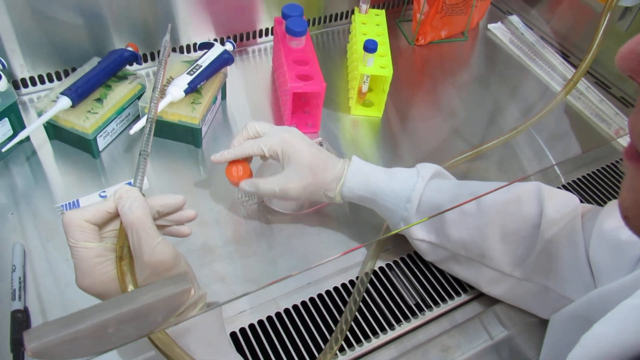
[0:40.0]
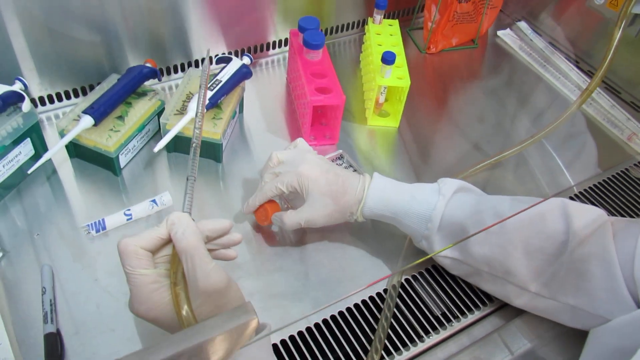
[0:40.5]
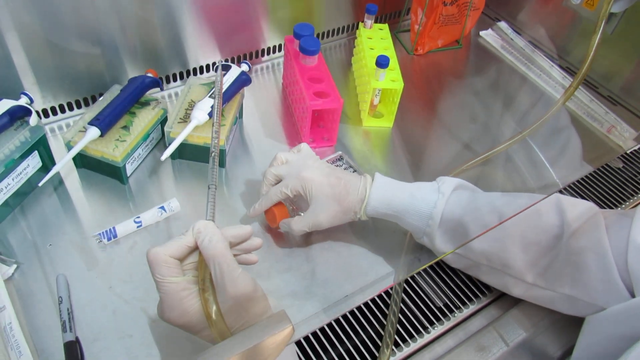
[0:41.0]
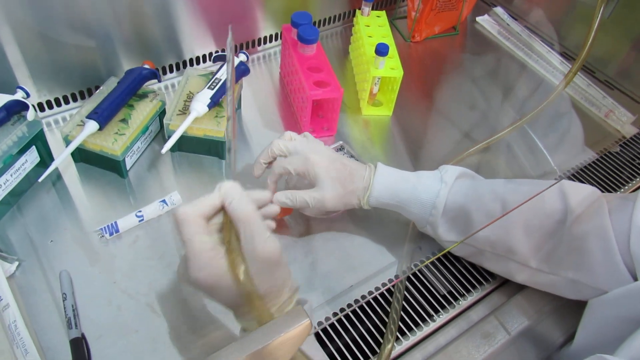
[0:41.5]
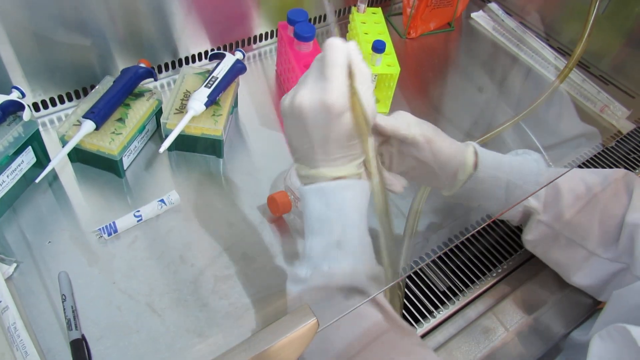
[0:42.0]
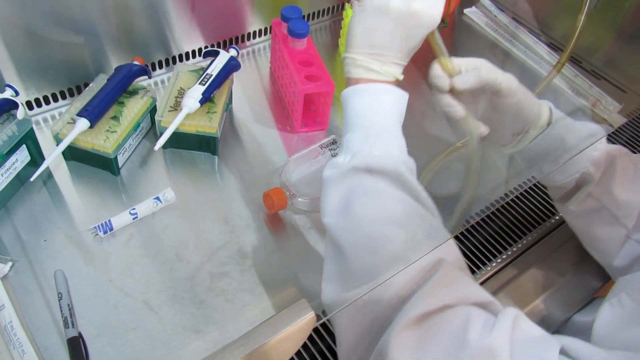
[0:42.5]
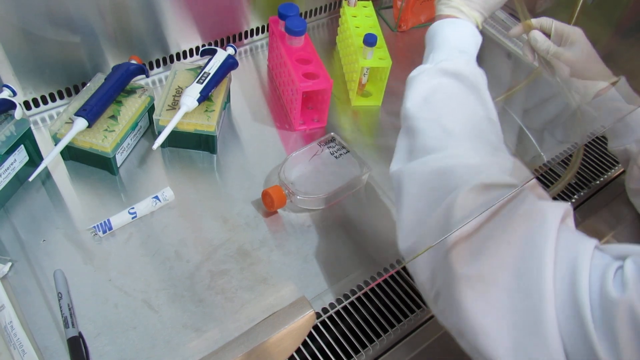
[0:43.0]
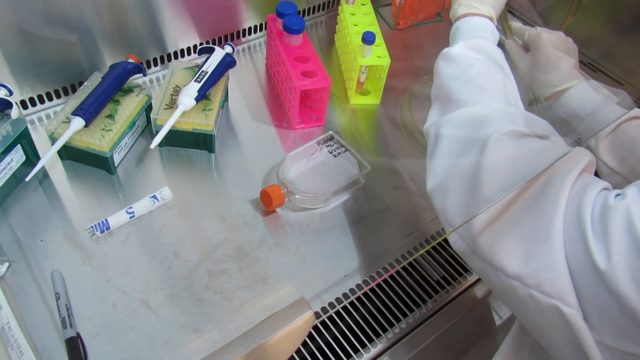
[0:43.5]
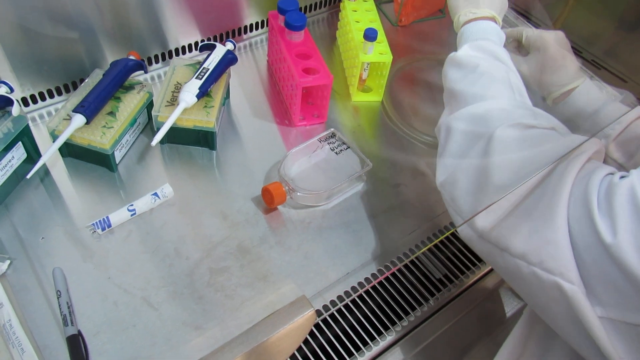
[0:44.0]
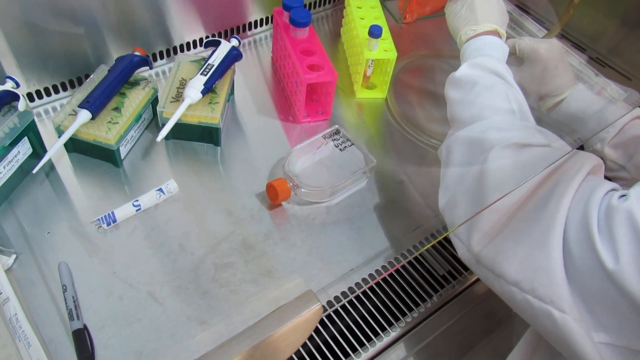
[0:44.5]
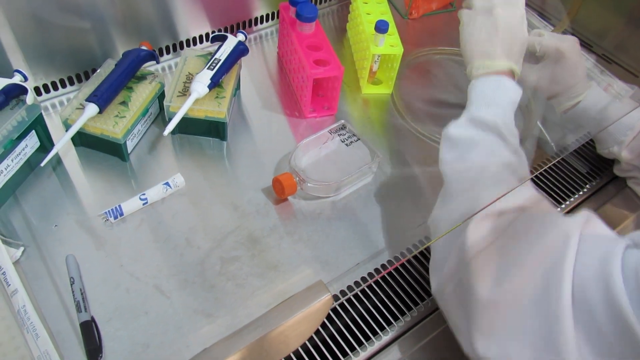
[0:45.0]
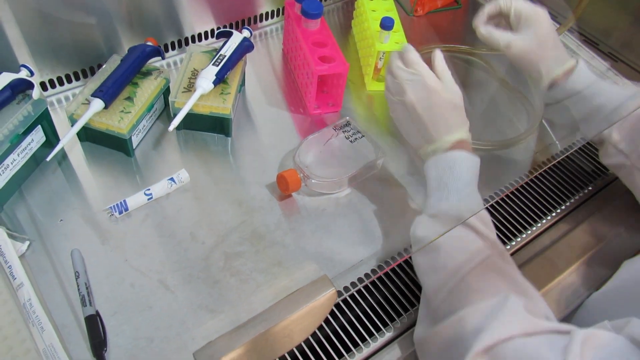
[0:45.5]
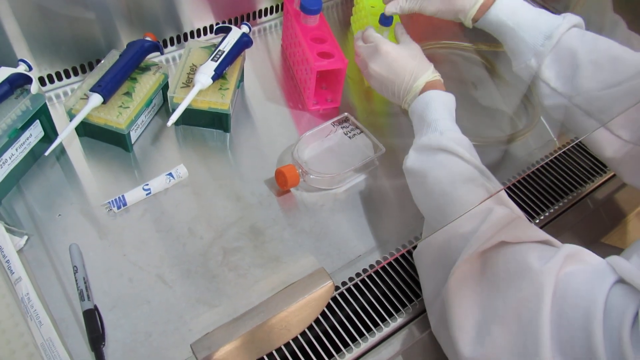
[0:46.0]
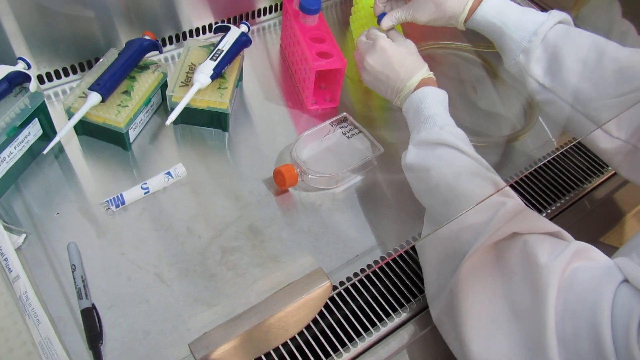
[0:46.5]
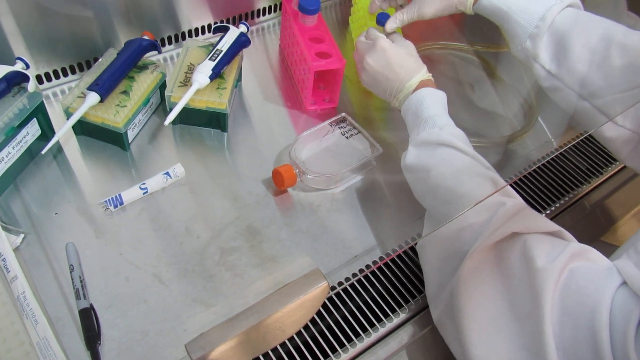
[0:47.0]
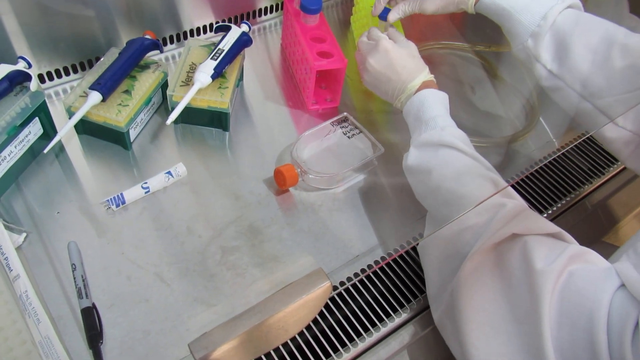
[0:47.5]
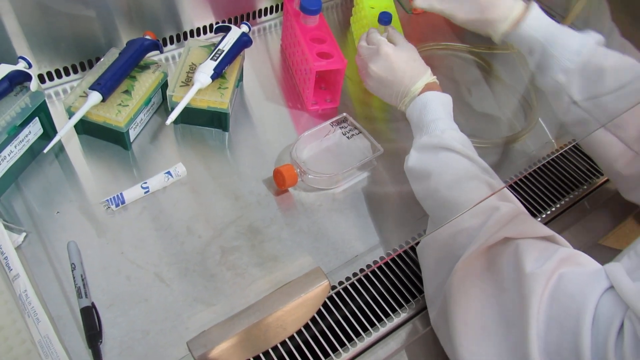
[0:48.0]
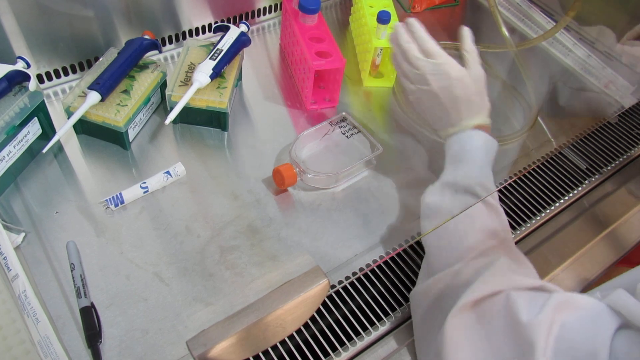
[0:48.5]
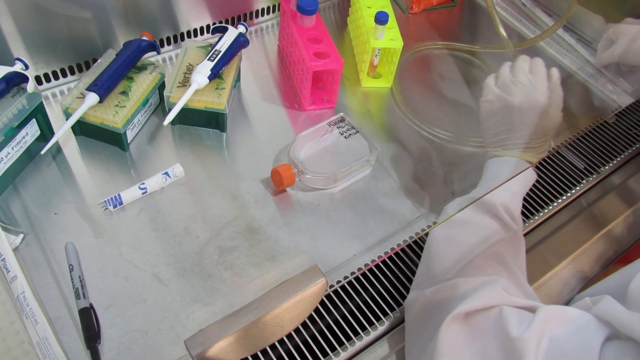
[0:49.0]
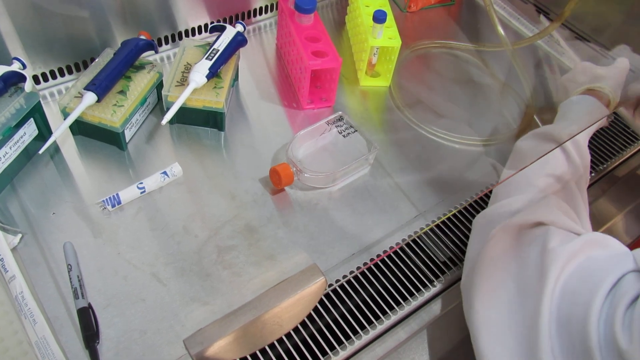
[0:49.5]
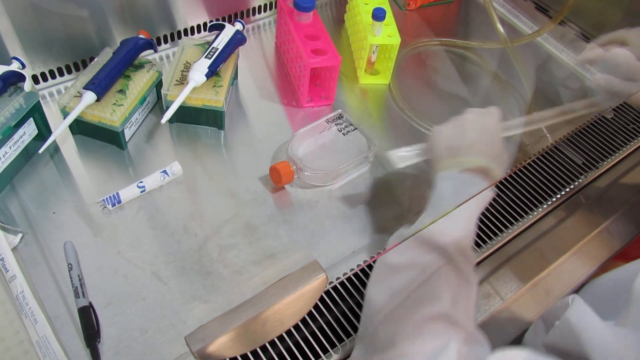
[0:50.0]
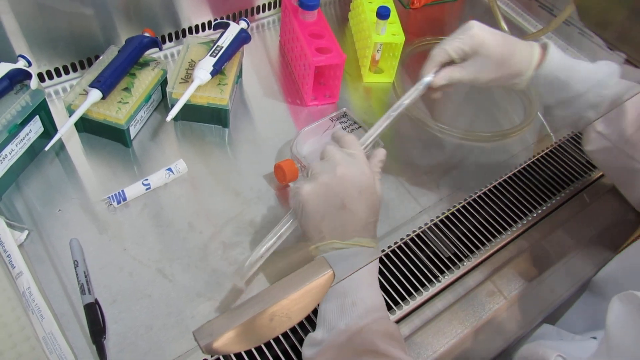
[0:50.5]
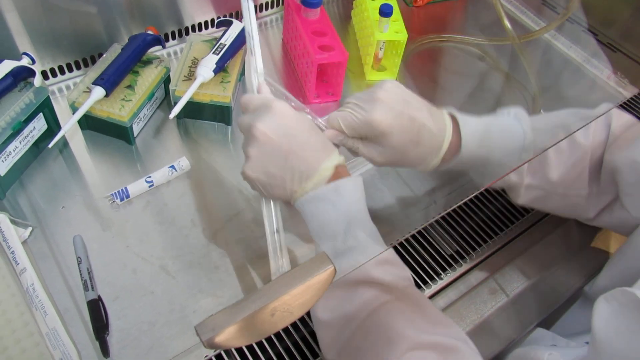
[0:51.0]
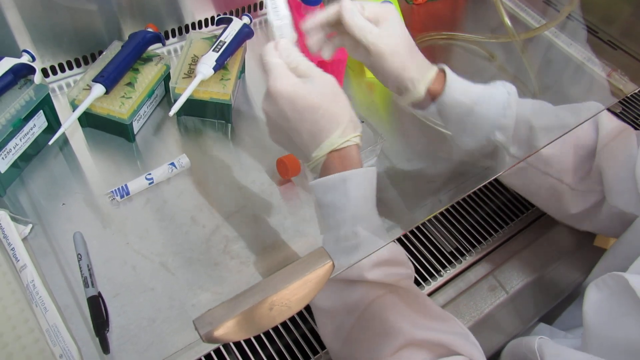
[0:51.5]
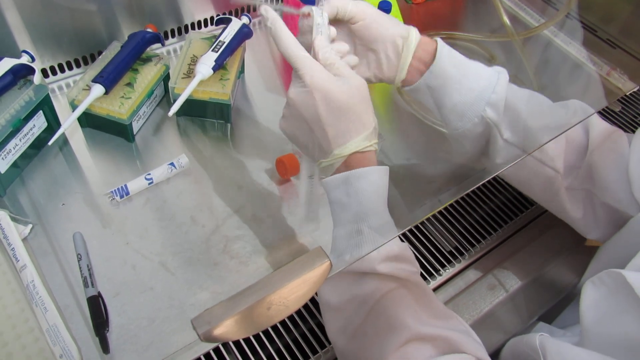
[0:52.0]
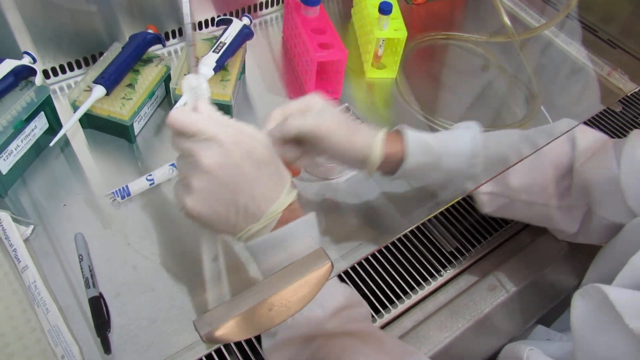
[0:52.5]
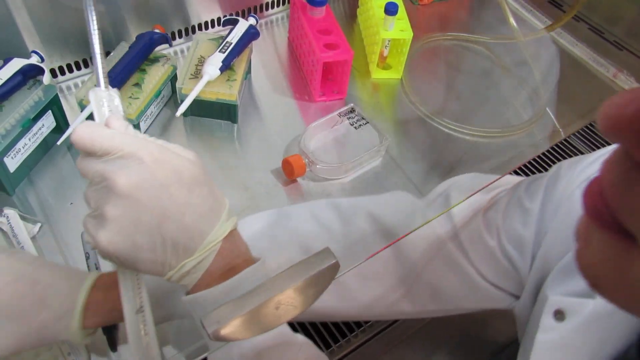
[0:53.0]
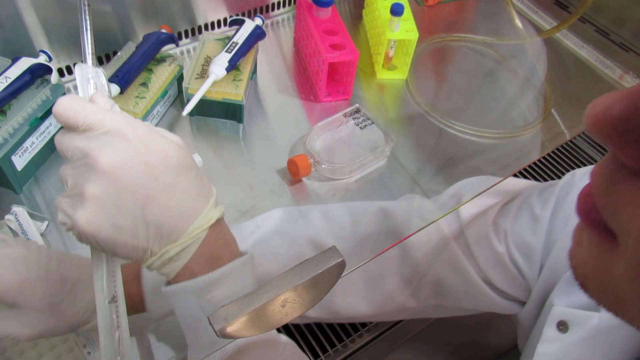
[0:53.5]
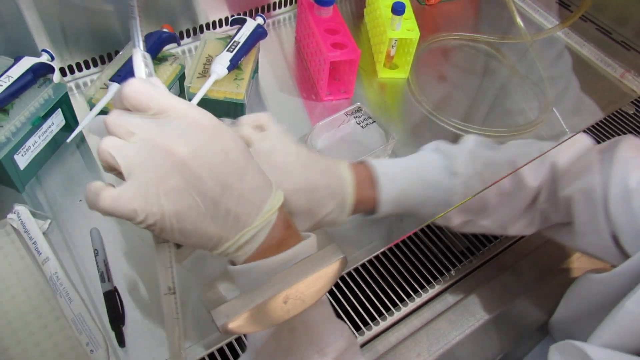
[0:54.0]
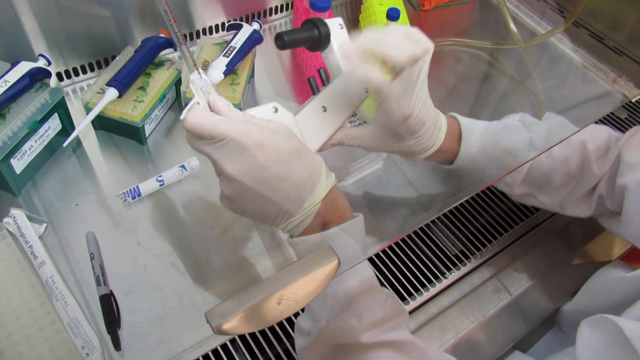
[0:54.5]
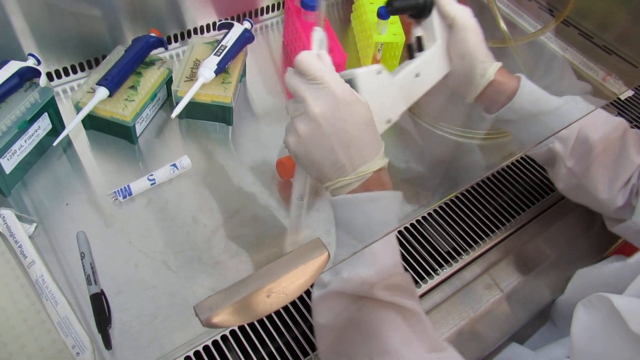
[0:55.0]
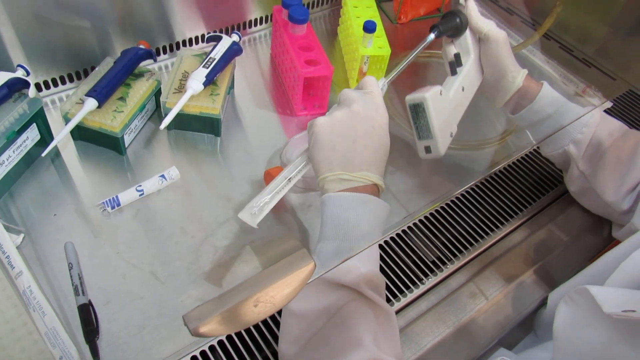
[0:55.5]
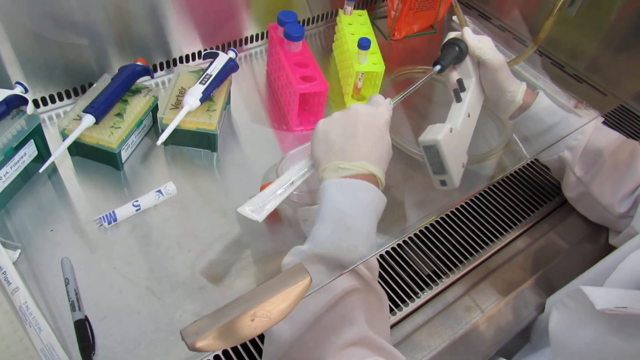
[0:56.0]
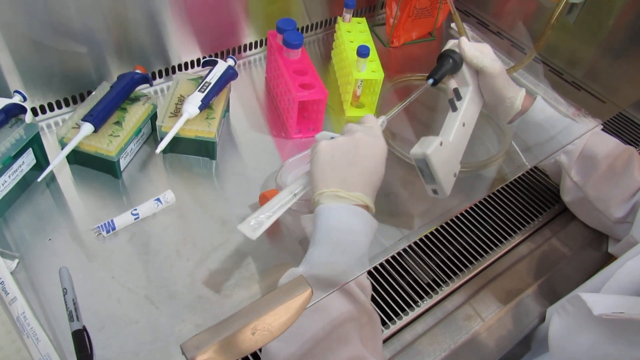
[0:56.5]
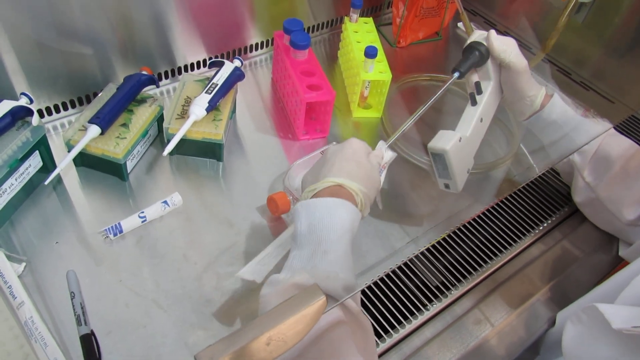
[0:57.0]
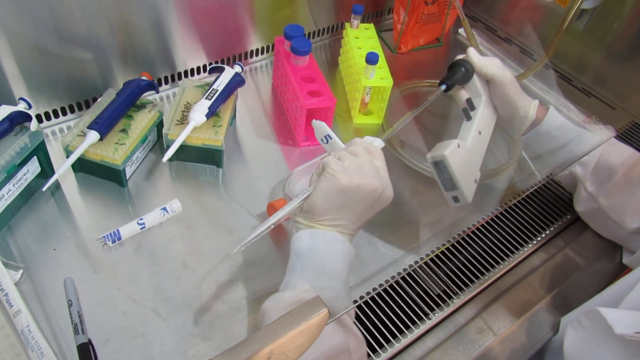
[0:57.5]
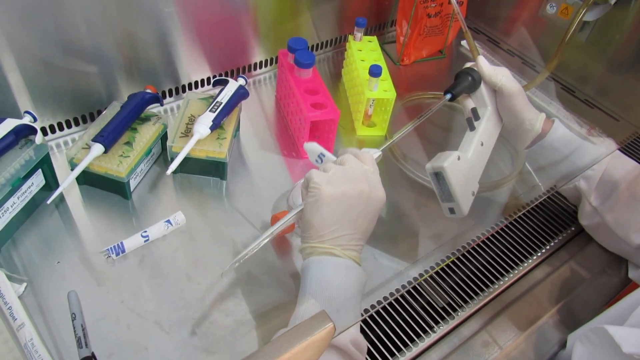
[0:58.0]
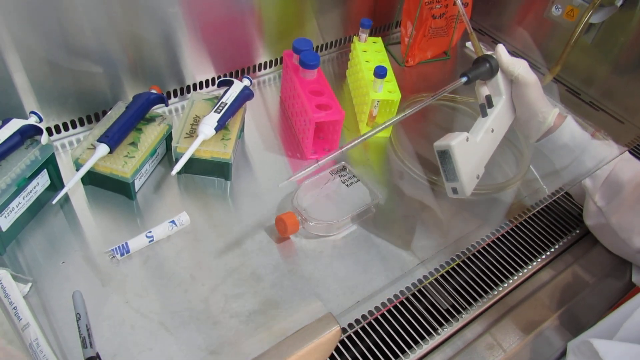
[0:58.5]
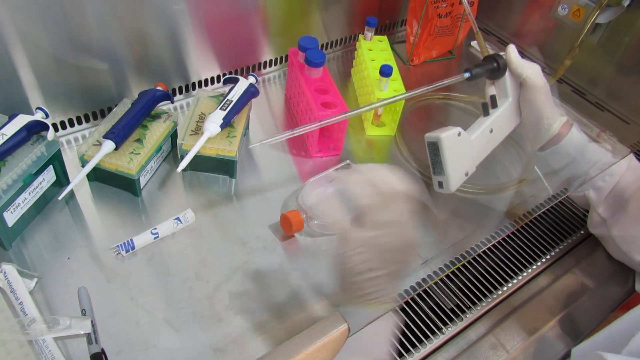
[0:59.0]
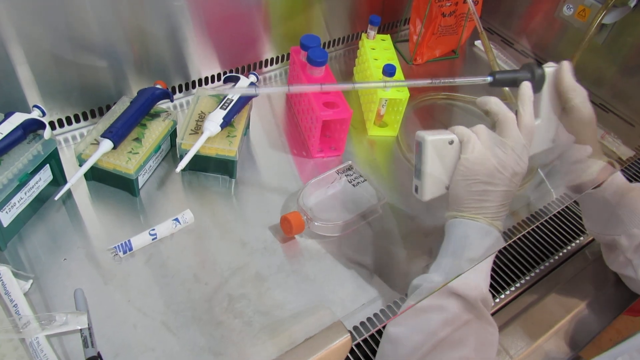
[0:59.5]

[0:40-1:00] The workspace appears to be a laboratory hood: a metal box with plexiglass that can be pulled down so only the arms and materials can slide in, apparently to prevent contamination, with vents above. The person still holds the long tube in their left hand with the thumb and pointer finger, starting with it in the air, slanted toward the right. They put it down, though the camera cuts off how. They go to the neon greenish yellow test tube holder and touch a blue lid as if to take it off, but seem to only loosen it. An unidentified tool, black at the end and white otherwise, looks like an ear-piercing gun. The person attaches the tube part they took out, putting it inside the black tip.